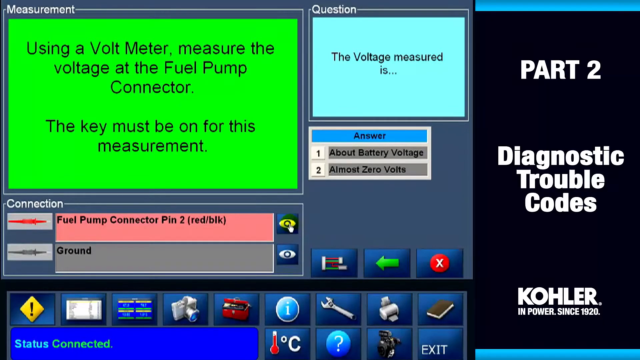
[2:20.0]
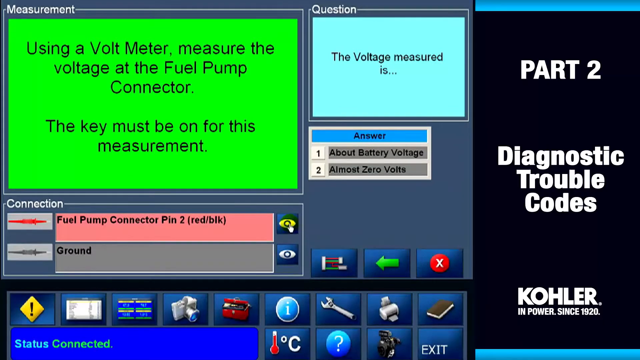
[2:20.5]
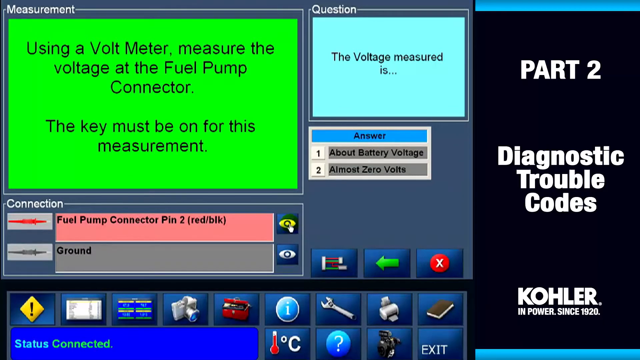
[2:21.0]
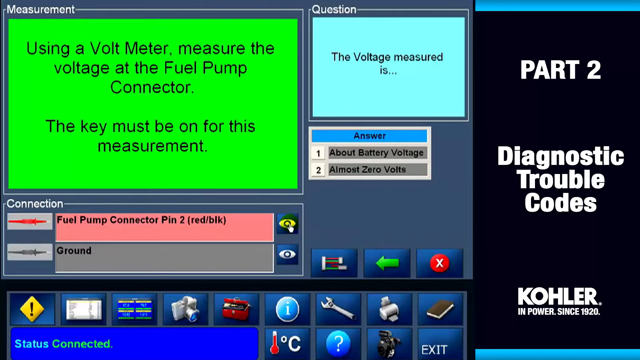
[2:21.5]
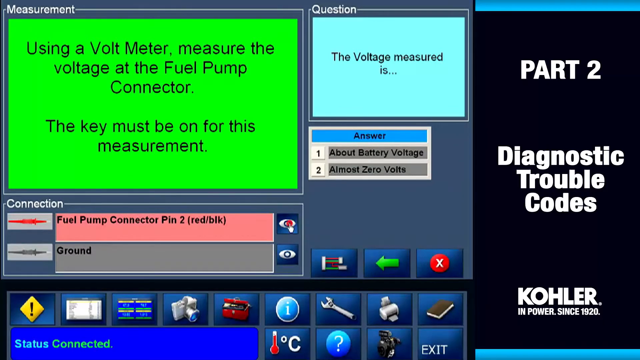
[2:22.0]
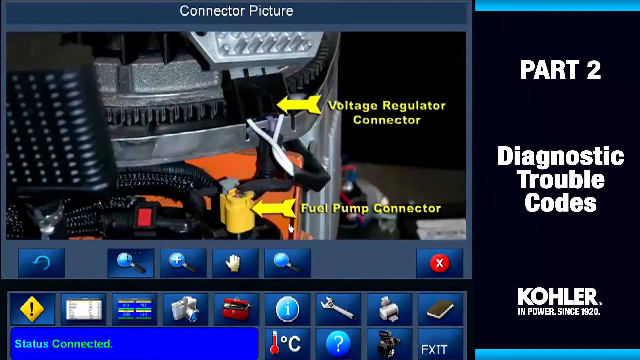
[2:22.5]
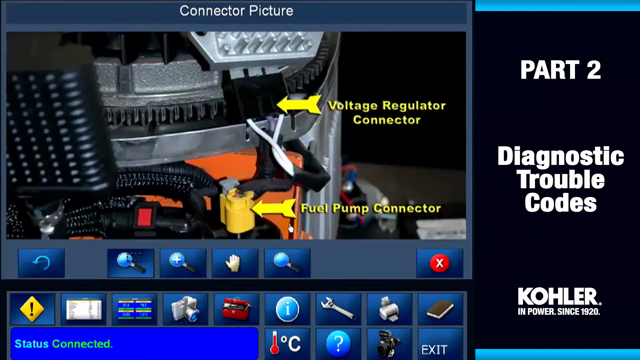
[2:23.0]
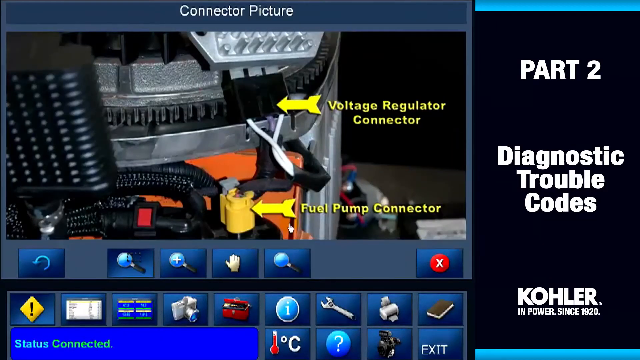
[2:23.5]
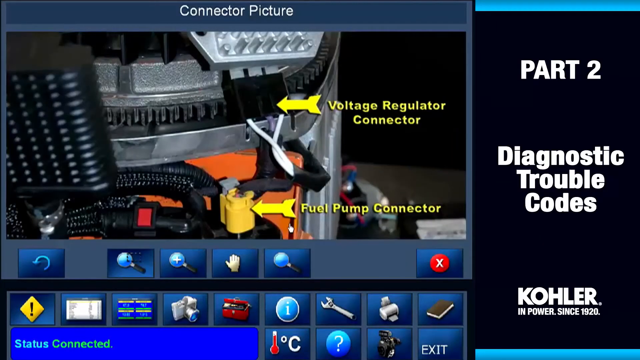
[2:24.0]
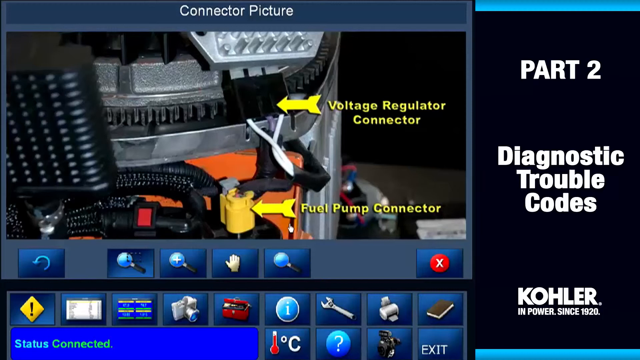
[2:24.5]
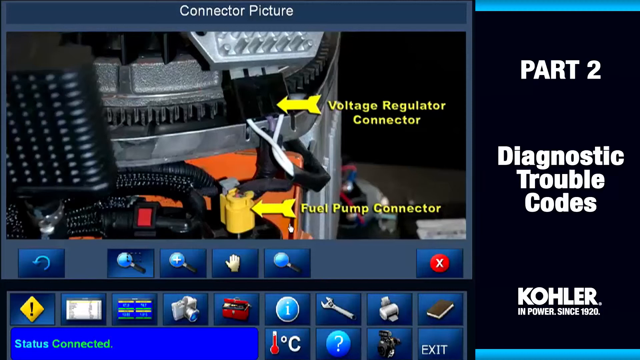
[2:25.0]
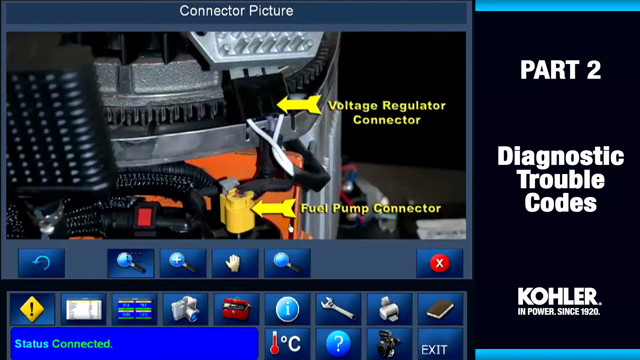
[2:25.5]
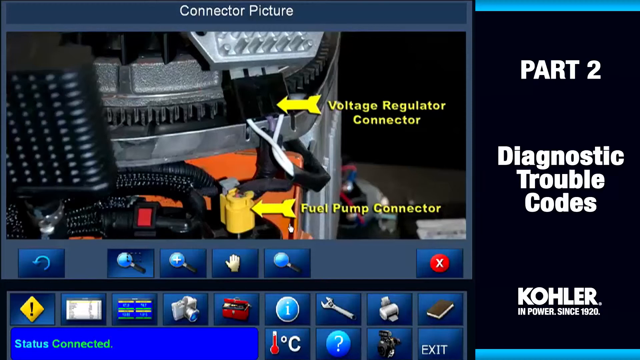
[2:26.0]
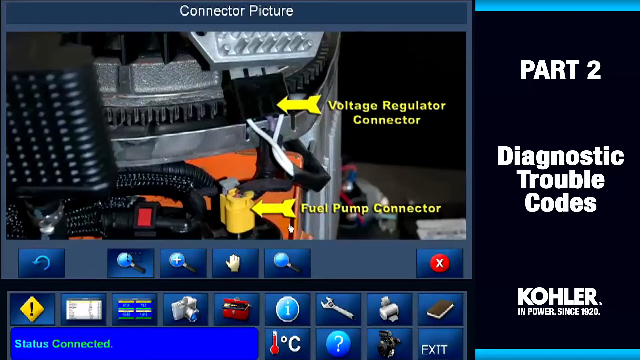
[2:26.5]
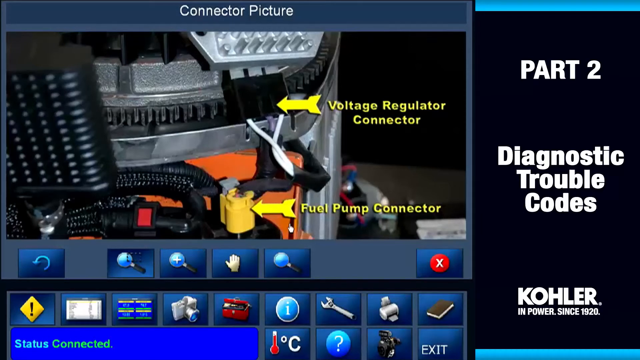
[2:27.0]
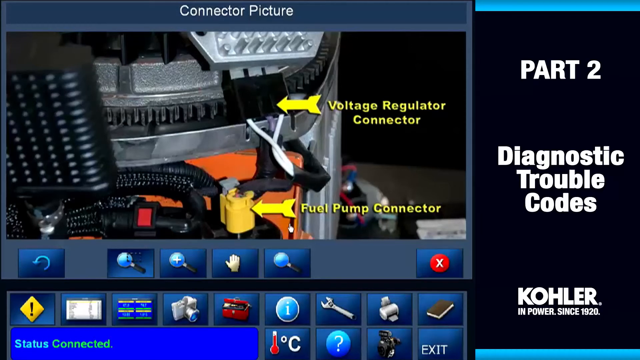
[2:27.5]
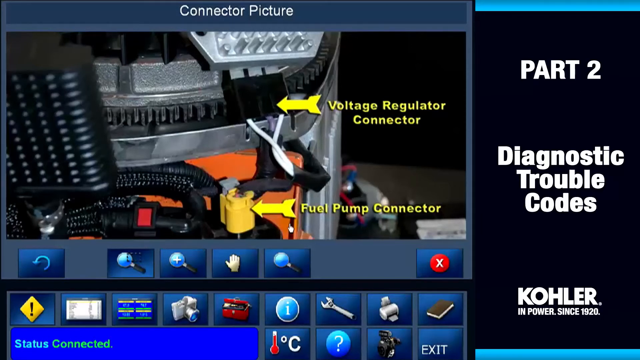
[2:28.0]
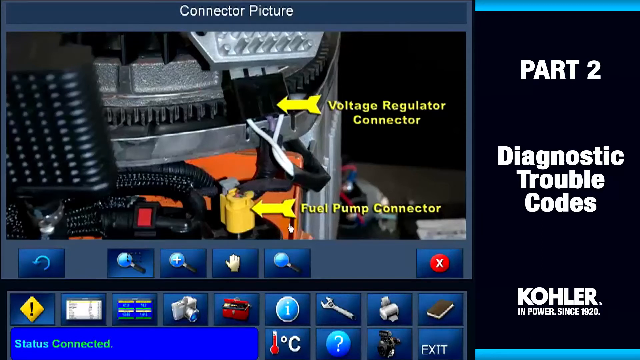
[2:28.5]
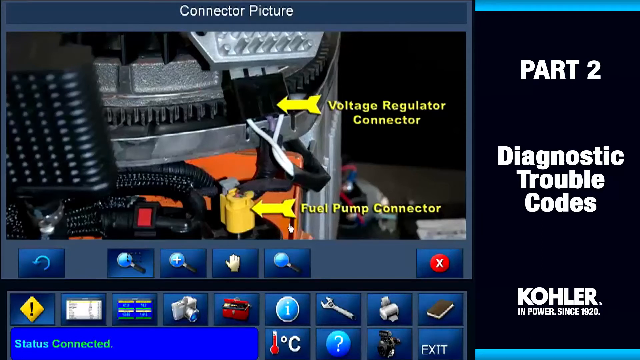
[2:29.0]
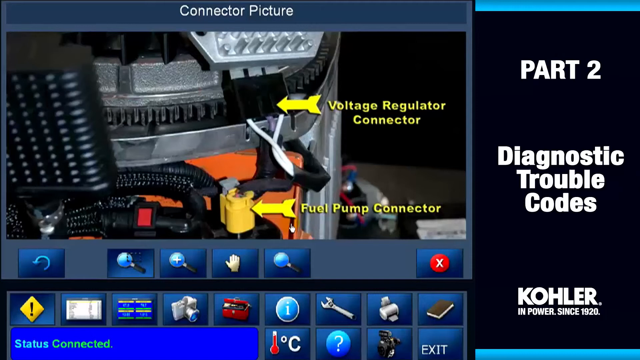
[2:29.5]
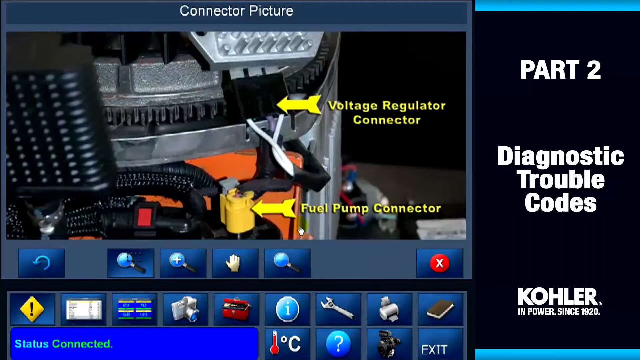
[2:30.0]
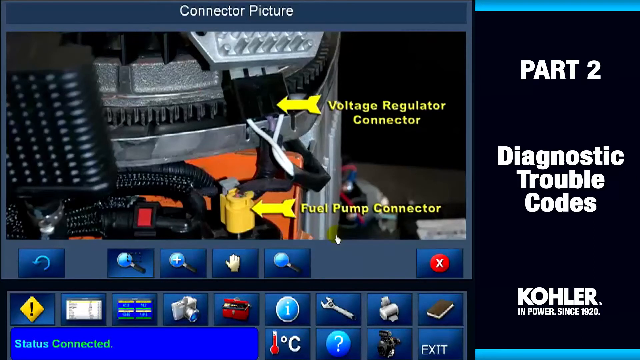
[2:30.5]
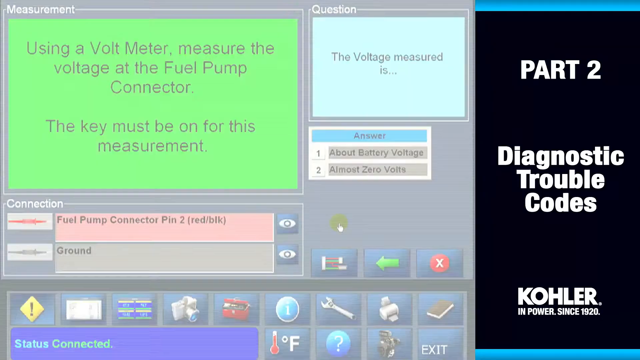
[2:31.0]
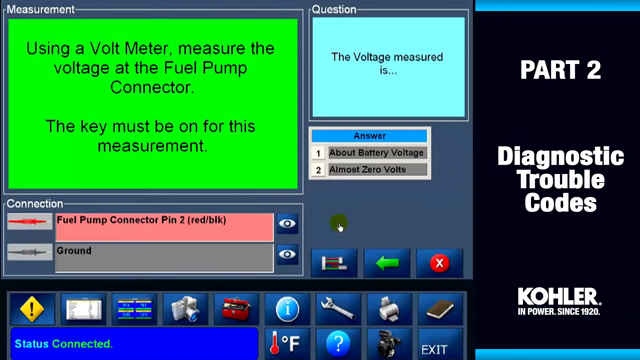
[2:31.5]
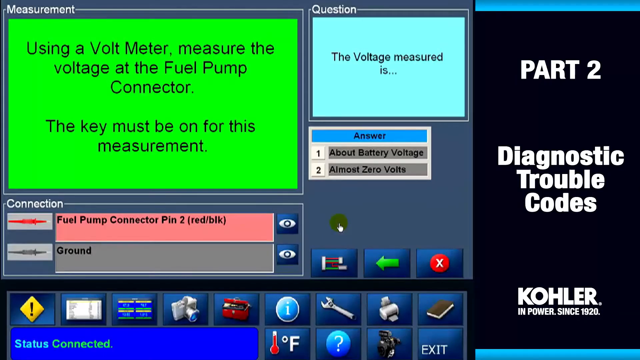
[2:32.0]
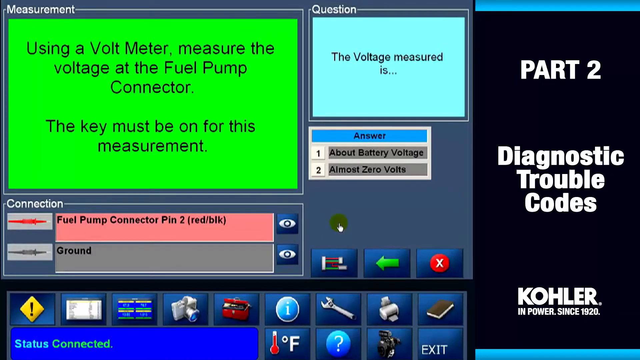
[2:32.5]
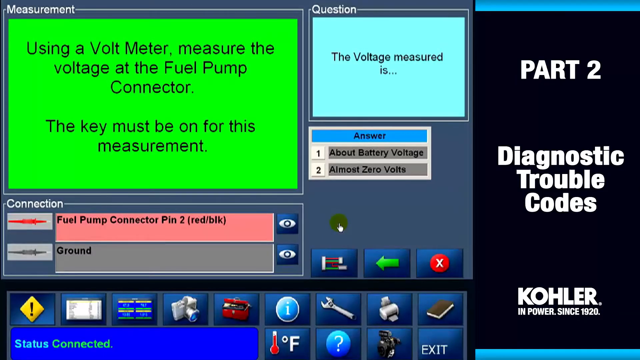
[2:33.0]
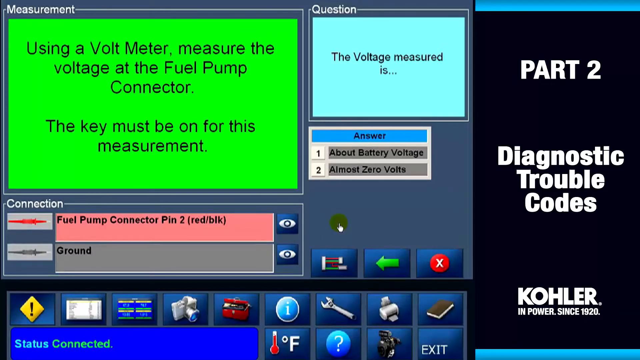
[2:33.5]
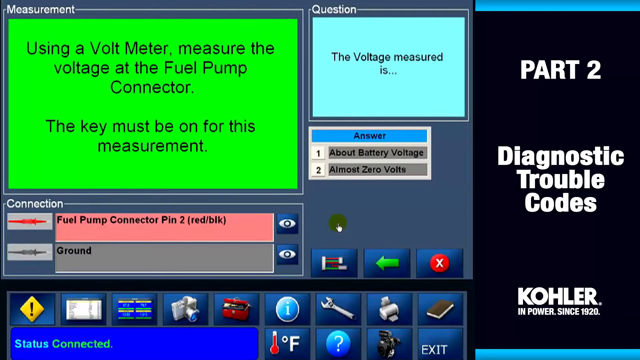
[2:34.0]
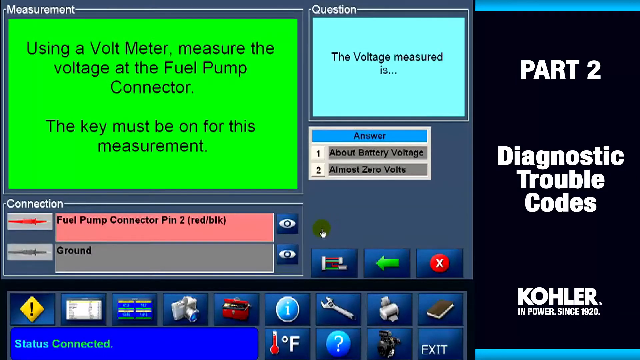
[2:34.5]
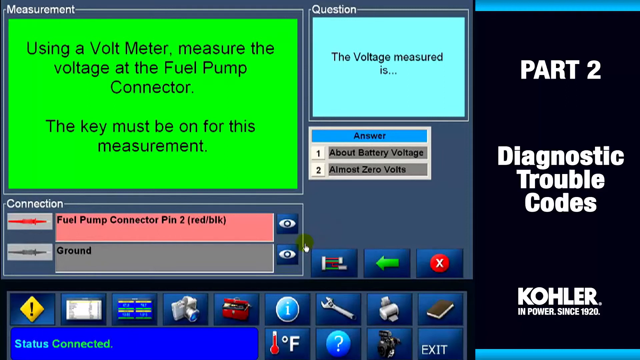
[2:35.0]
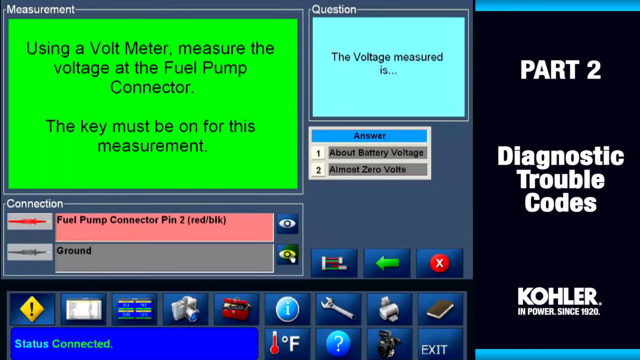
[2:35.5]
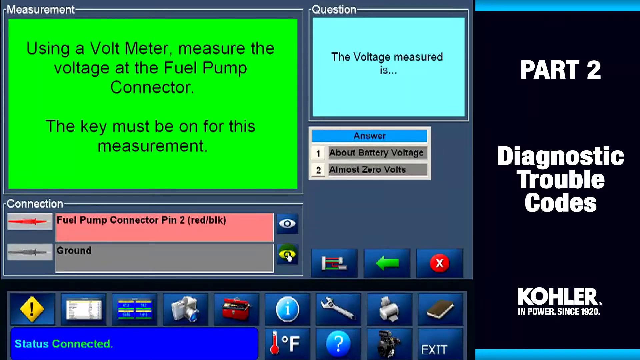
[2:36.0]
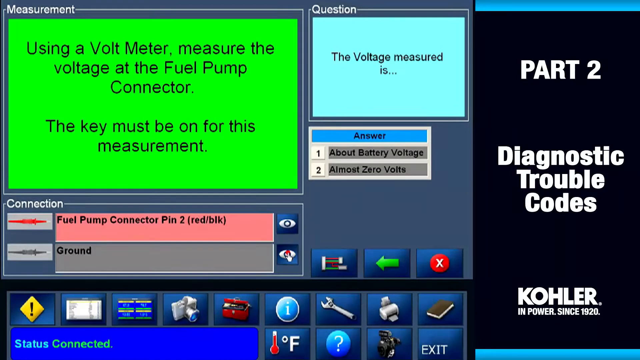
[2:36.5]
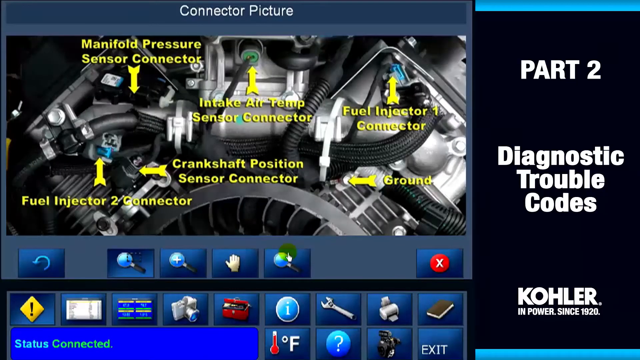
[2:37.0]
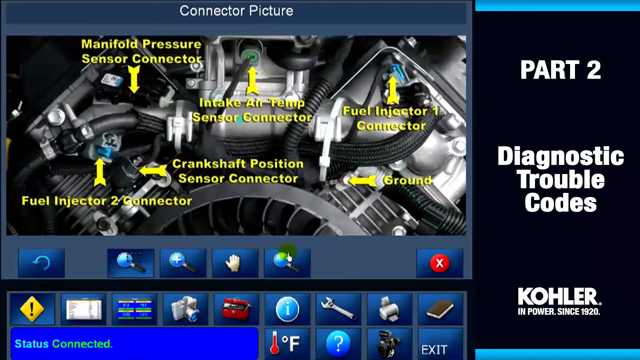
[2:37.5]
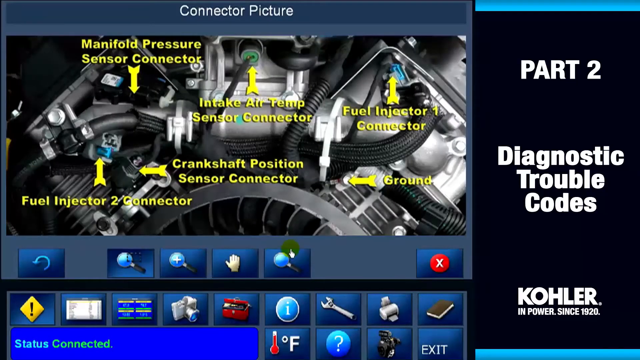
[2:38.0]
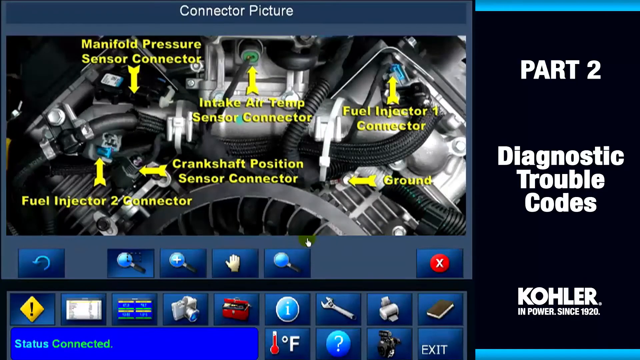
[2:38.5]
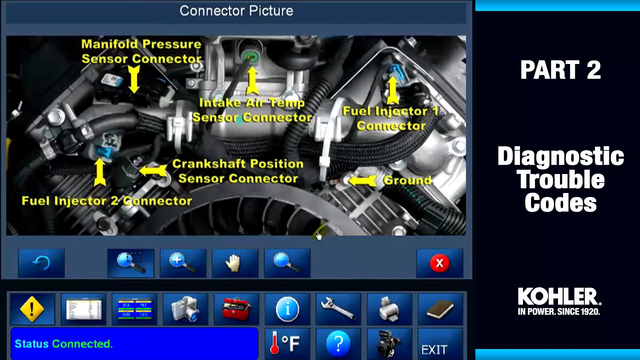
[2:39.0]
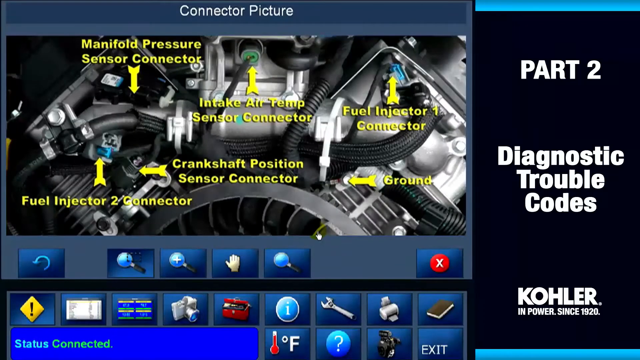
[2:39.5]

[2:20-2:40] A screen reads "Measurement" in a green box with black words: "Using a voltmeter measure the voltage at the fuel pump connector. The key must be on for this measurement." and "The voltage measure is". A picture of sample parts follows, labeled "Voltage regulator connector" and "Fuel pump connector", each with an arrow. The view returns to the first screen and a cursor moves. Another large image appears, titled "Connector picture", with labels "Manifold pressure sensor connector", "Intake air temp sensor connector", "Fuel injector one connector", "Fuel injector two connector" and "Crankshaft position sensor connector", and an arrow labeled "Ground".